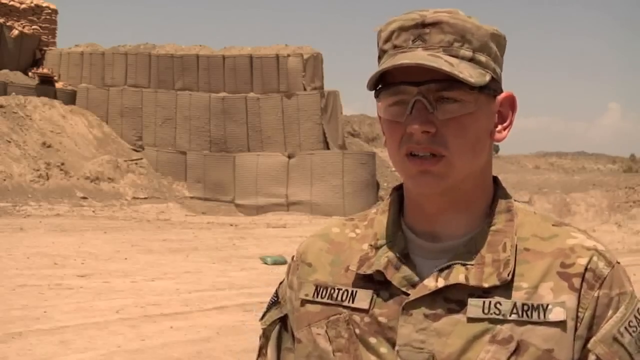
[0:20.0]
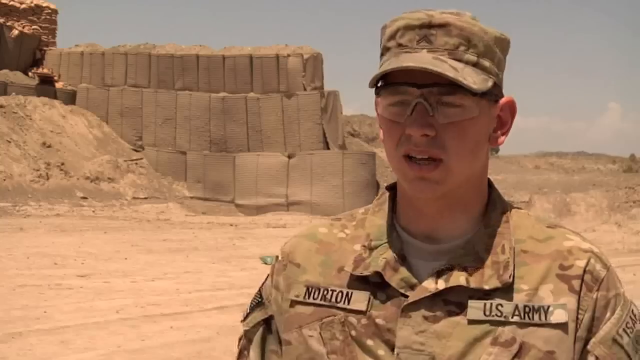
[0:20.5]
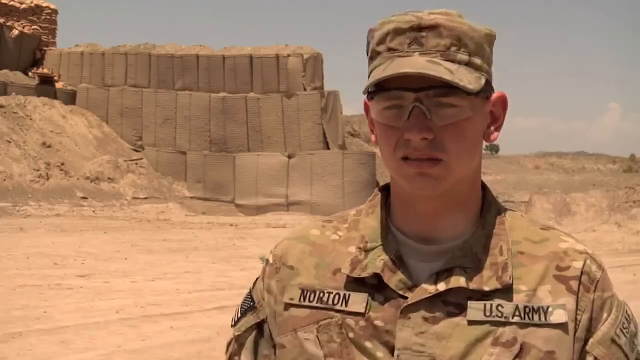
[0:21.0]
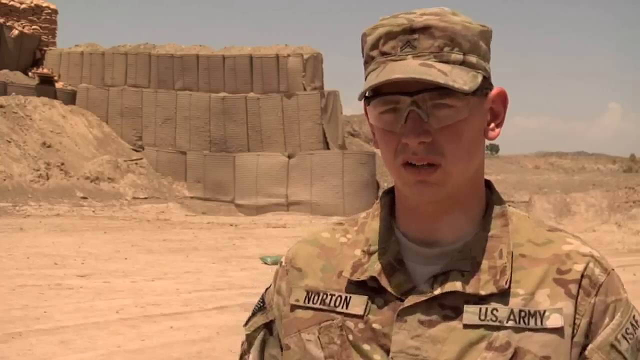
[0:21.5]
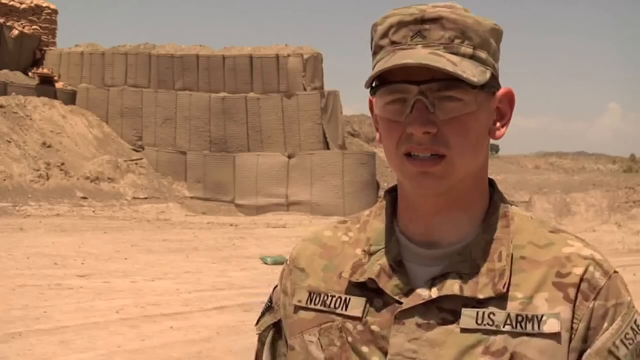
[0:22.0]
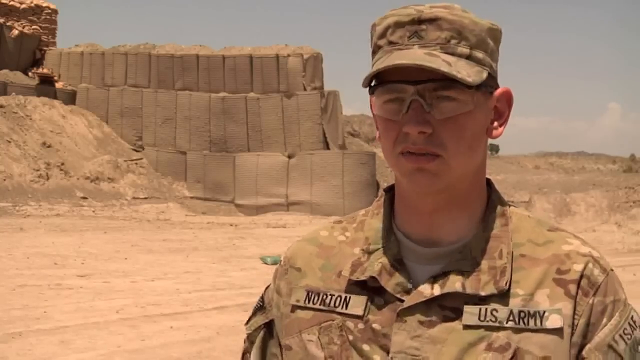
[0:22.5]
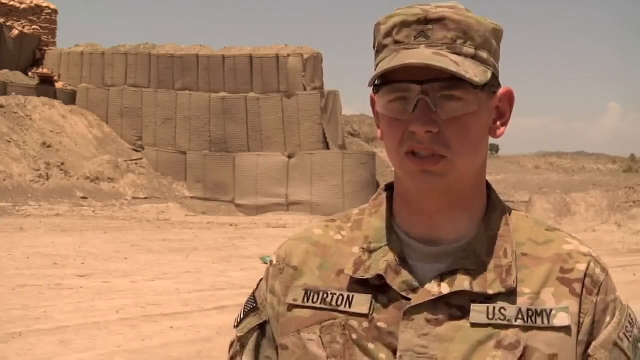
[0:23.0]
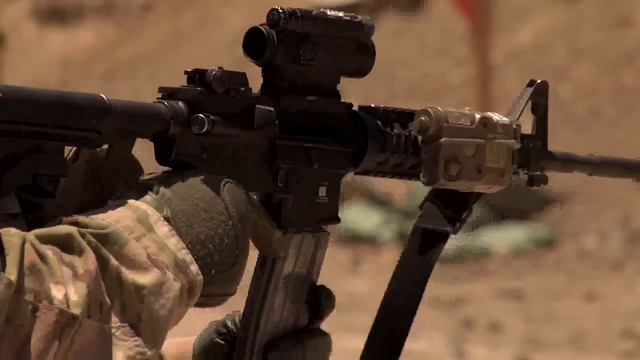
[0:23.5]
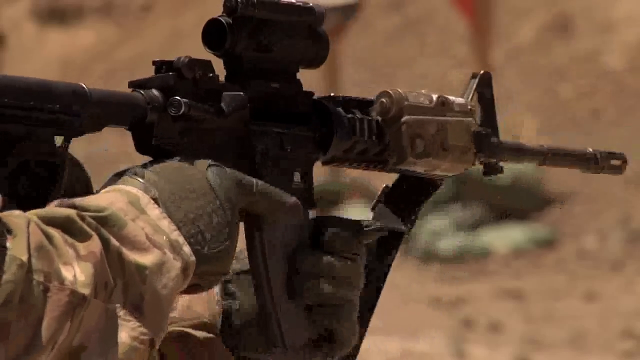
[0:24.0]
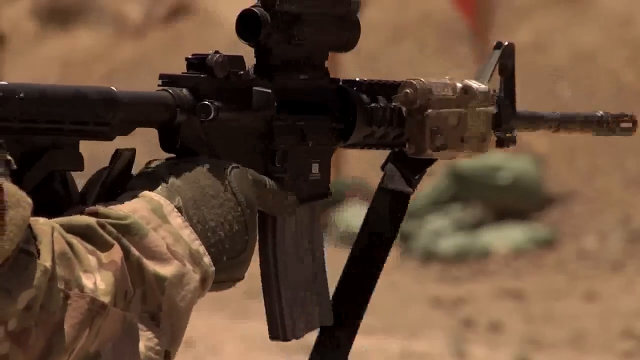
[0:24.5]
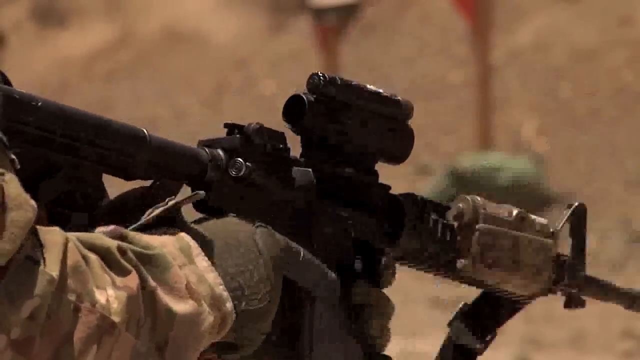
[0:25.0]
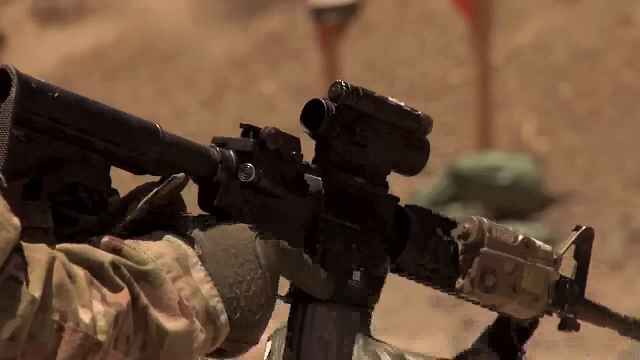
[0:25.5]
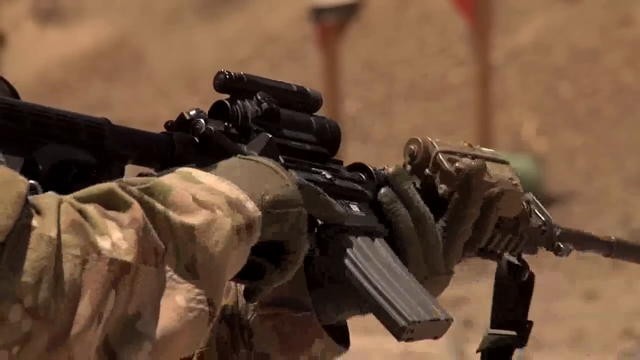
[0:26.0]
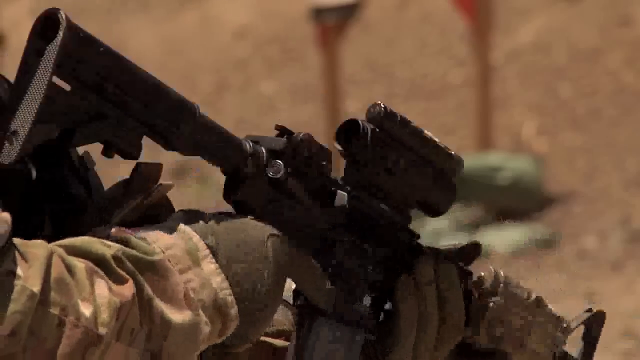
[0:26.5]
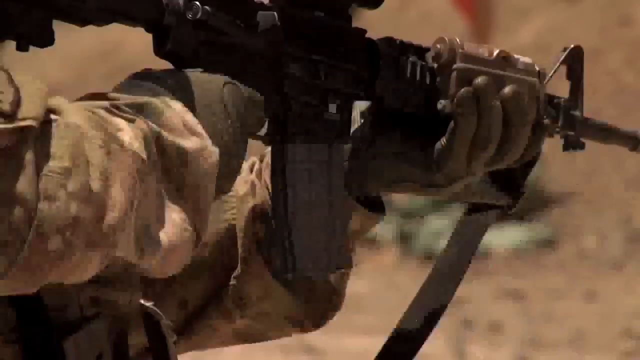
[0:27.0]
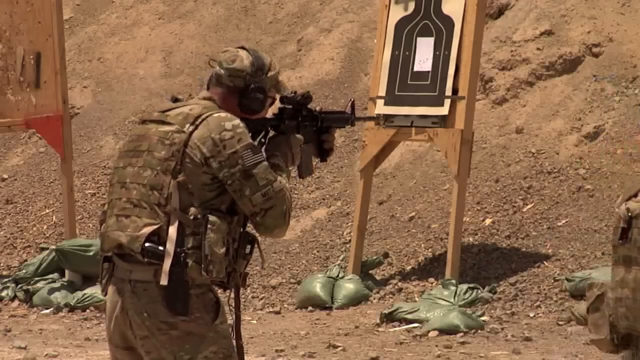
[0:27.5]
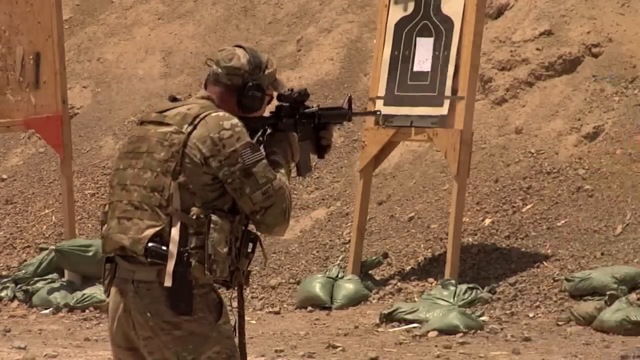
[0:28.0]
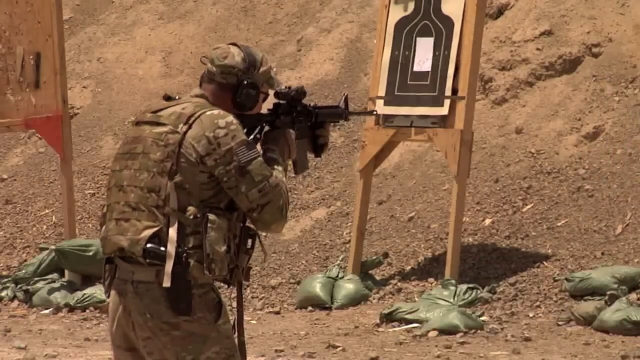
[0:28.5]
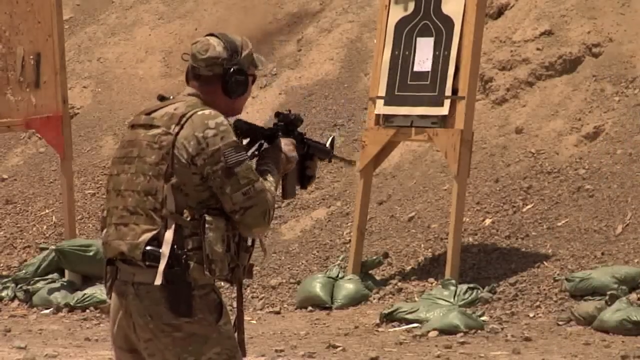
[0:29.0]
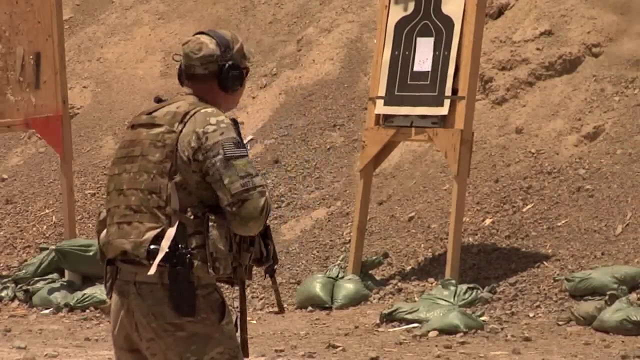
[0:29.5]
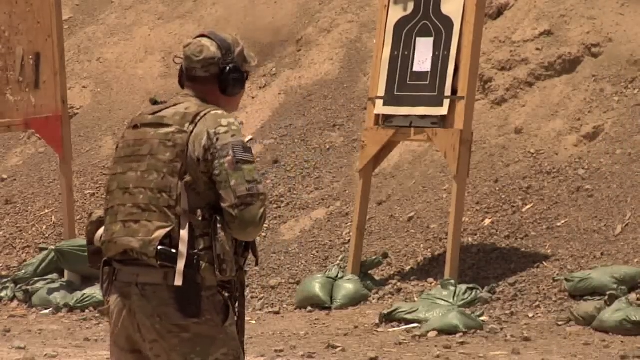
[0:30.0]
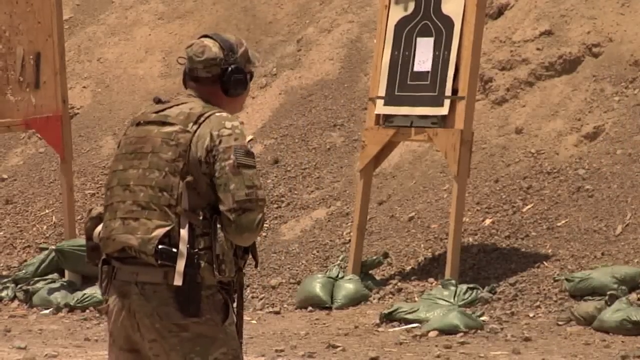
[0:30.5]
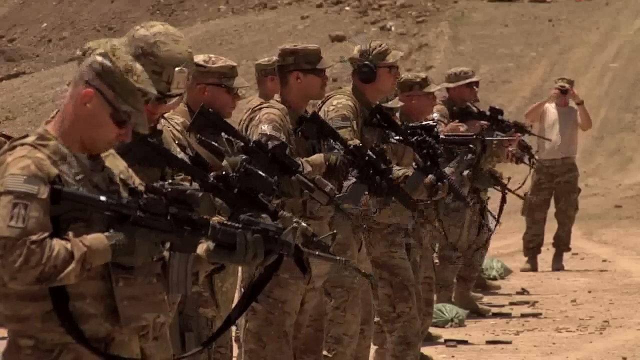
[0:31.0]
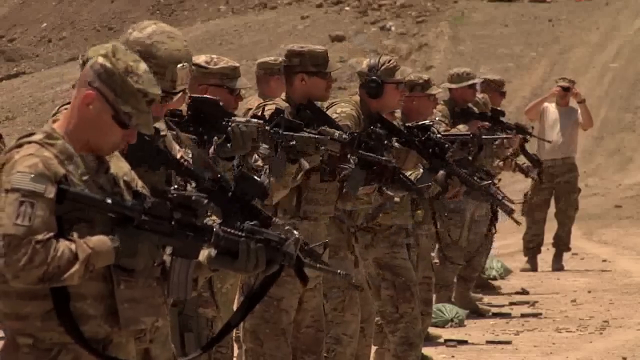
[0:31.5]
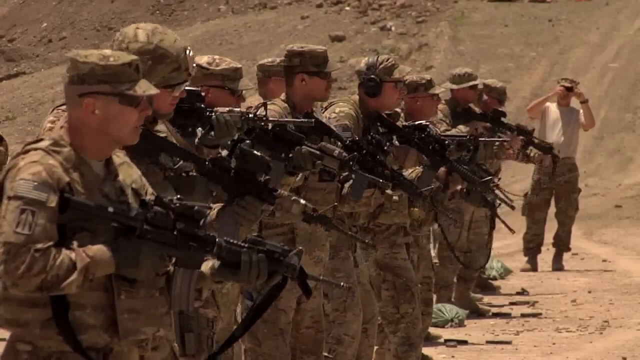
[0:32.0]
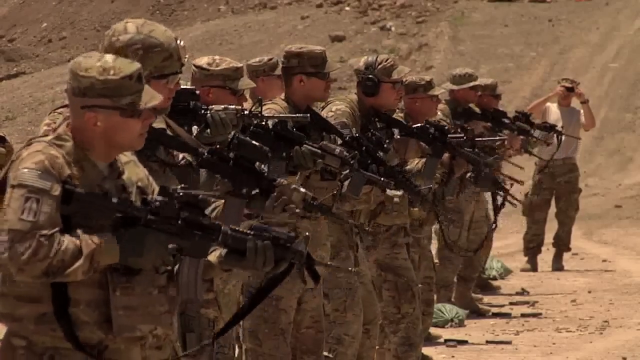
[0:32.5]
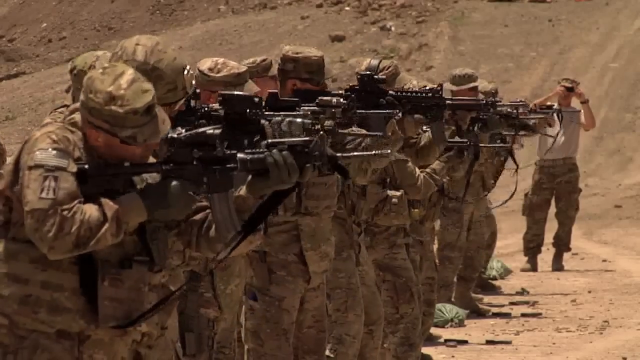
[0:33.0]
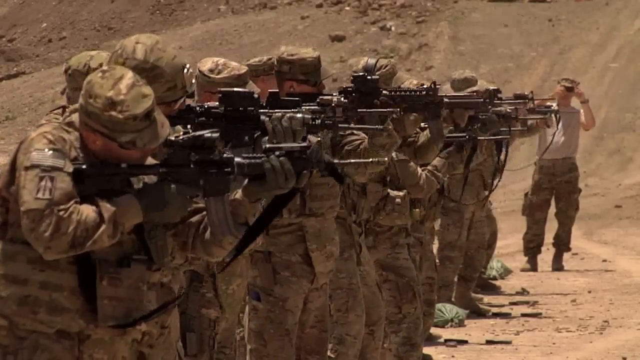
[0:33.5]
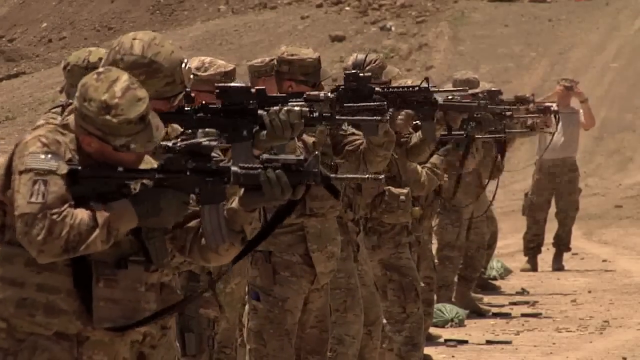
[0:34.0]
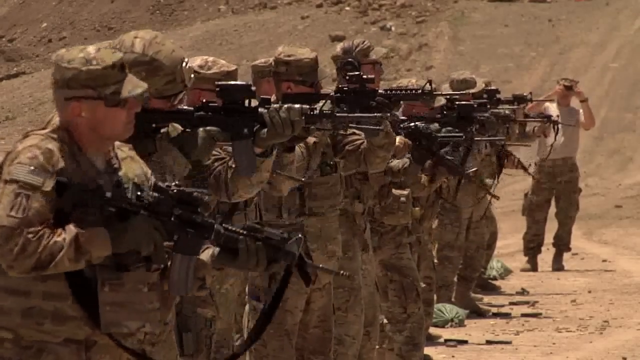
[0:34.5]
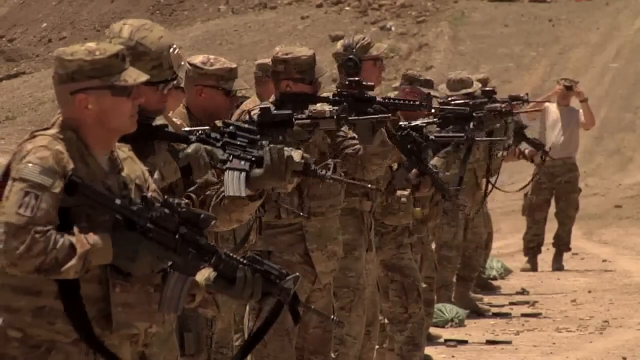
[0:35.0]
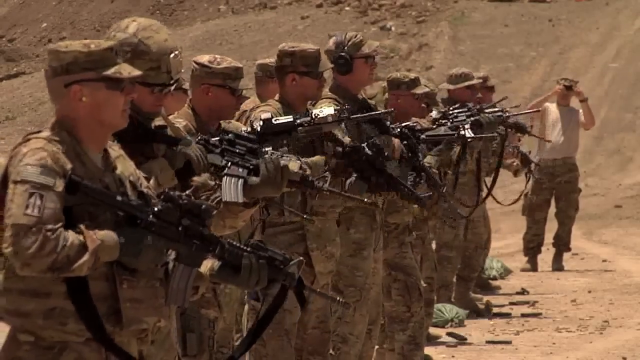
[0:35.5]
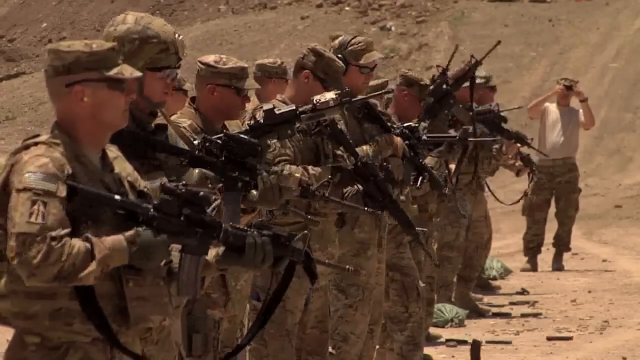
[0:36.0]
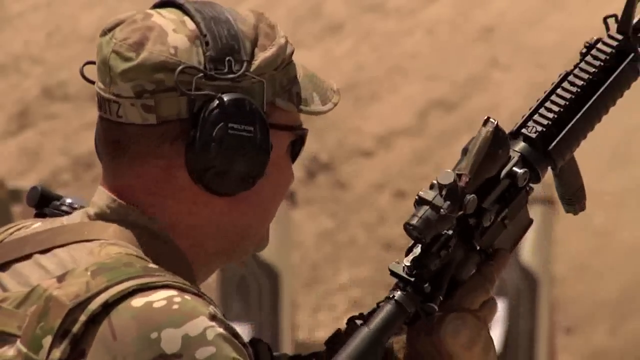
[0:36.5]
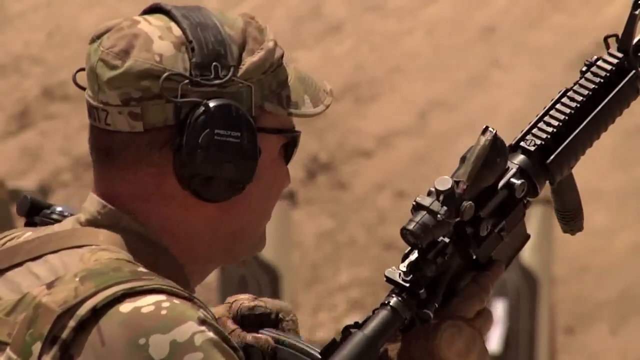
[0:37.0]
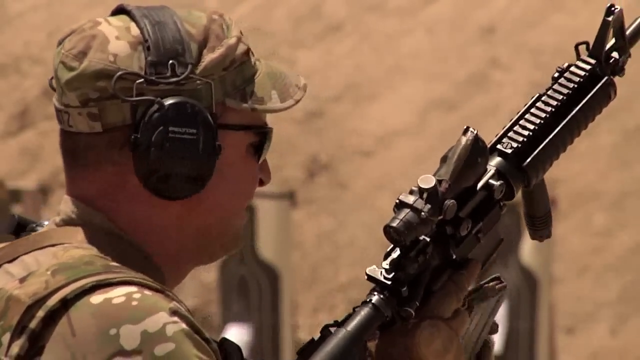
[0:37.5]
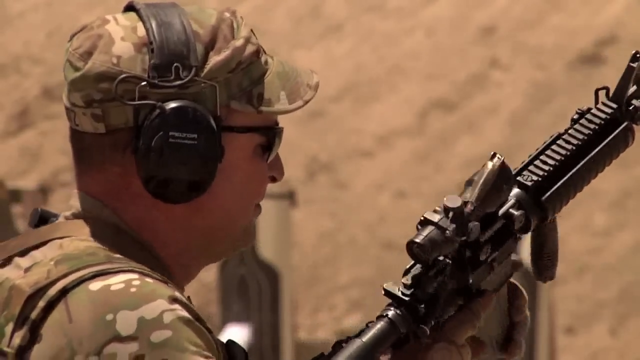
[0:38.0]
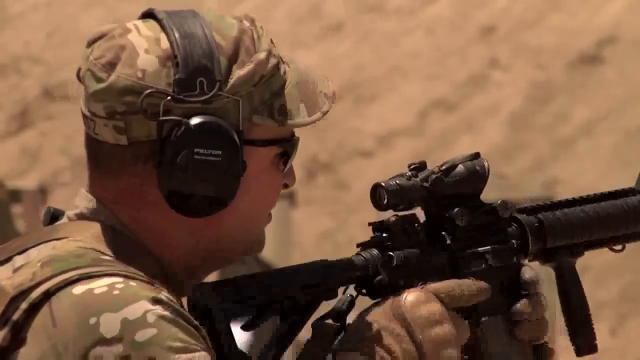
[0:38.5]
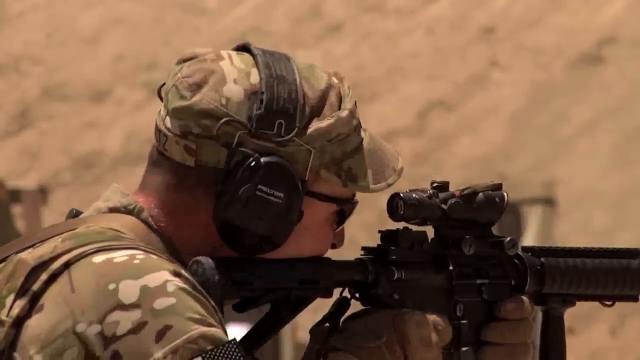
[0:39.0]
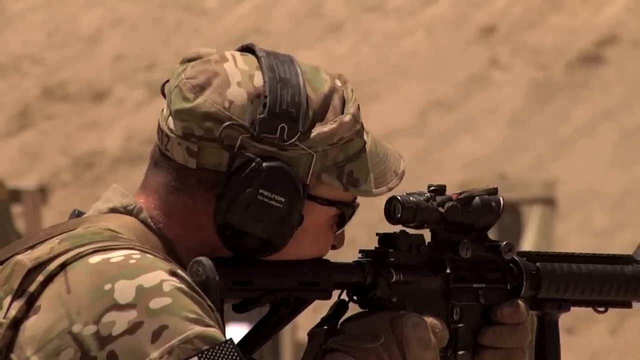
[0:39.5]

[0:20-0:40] A soldier, a young man in his 20s, speaks to a reporter, talking directly to the camera. On the right side of his chest a name tag sewn into his military uniform reads "NORTON", and on the left side a tag sewn into his uniform reads "US ARMY". He wears a grey t-shirt underneath his army jacket. In the background are sand dunes and sandbags scattered around. A close-up shows a soldier handling a rifle before pointing and shooting it at a target. Several other soldiers are doing target practice, all wearing large black protective ear wear as well as protective eyewear. An army officer stands at the end of the line of soldiers, supervising them as they continue their target practice. The conditions look very hot and dry, and the area is very isolated.